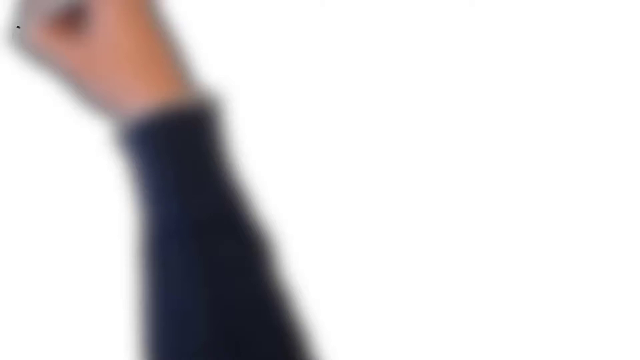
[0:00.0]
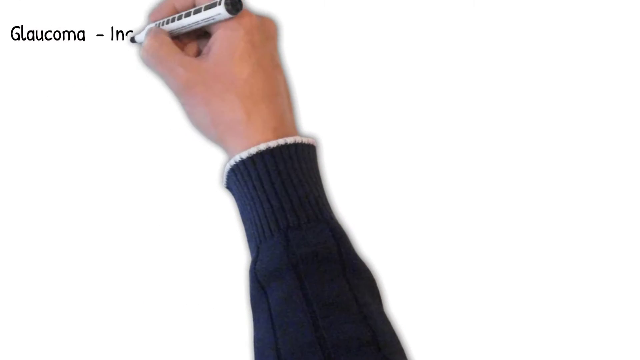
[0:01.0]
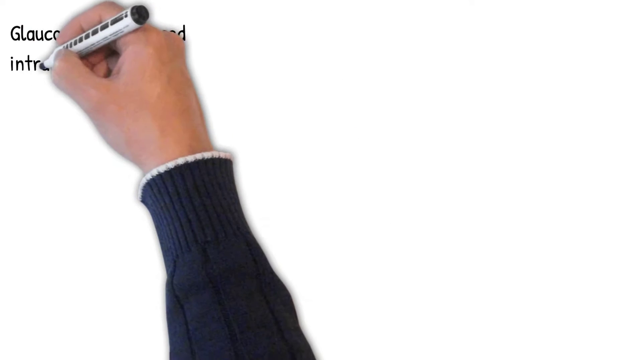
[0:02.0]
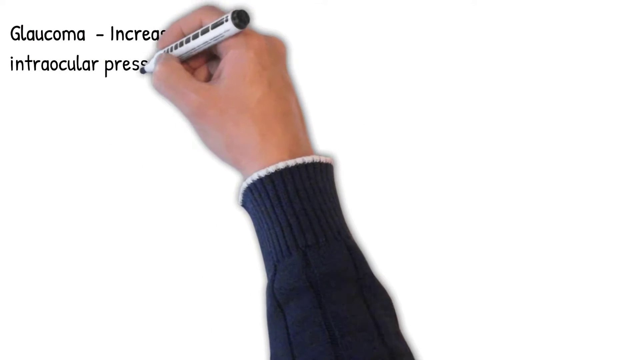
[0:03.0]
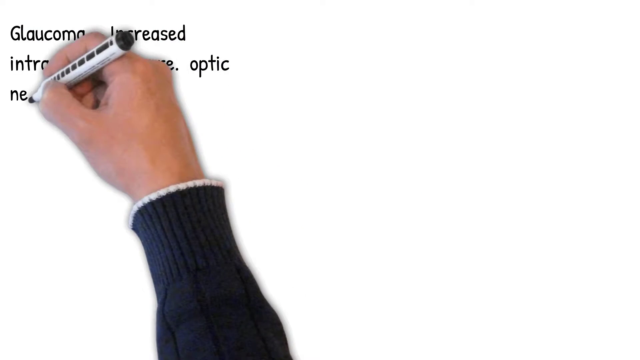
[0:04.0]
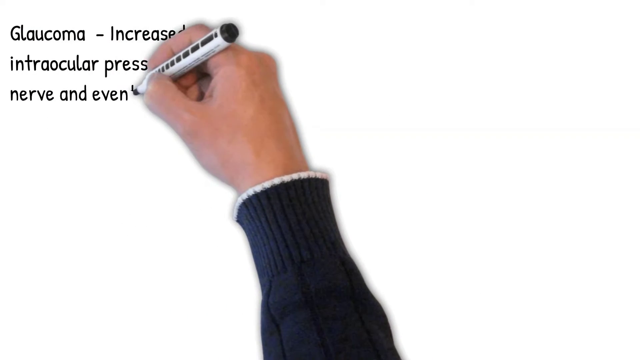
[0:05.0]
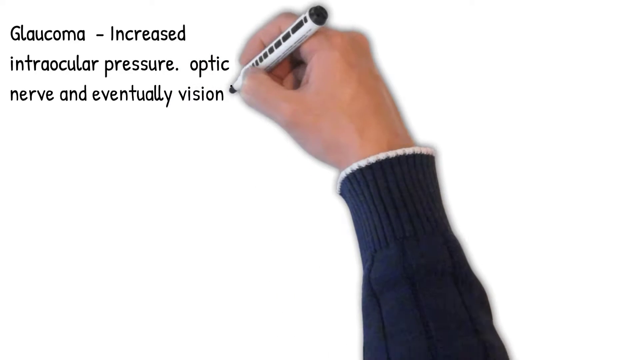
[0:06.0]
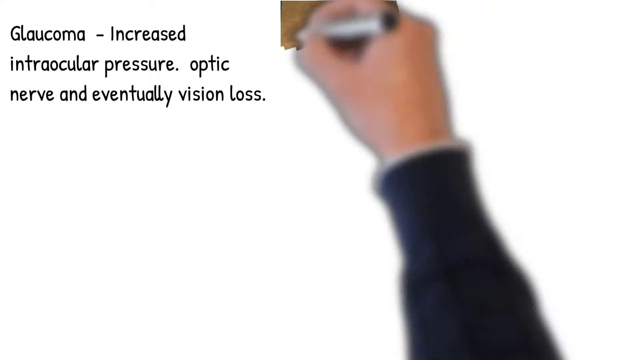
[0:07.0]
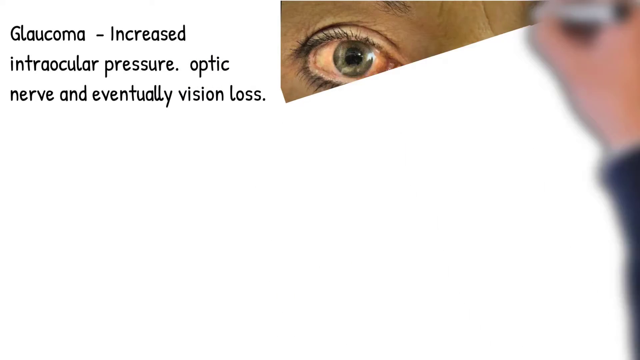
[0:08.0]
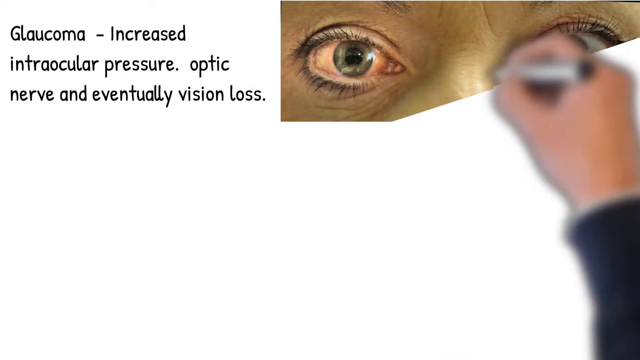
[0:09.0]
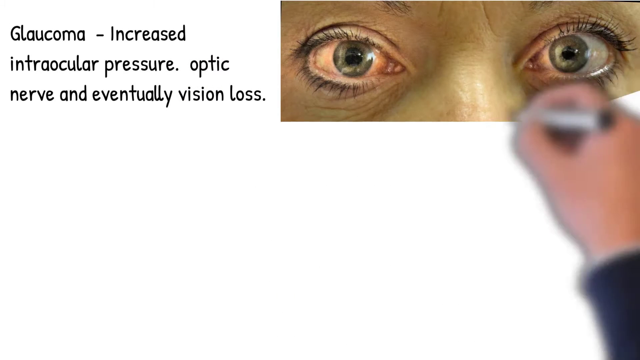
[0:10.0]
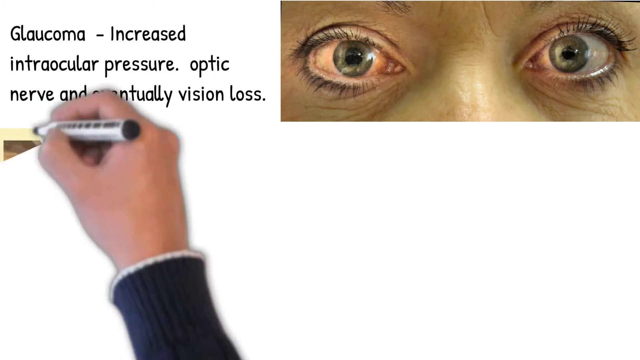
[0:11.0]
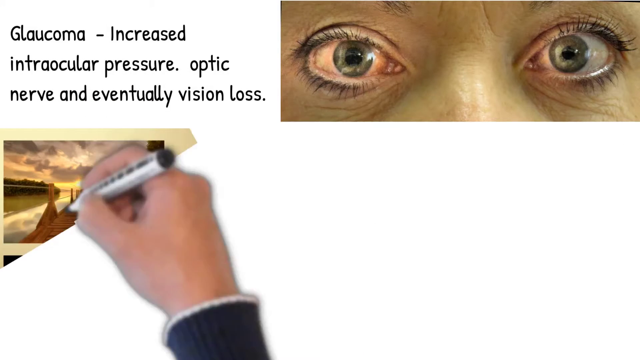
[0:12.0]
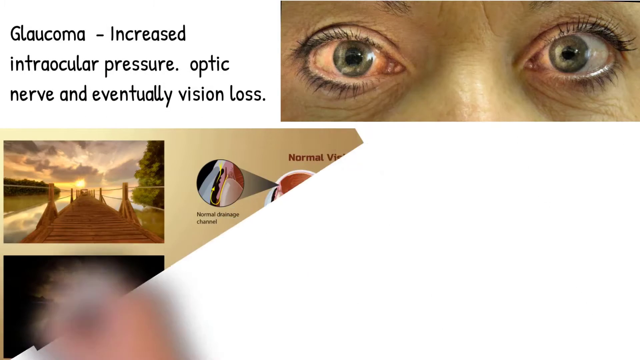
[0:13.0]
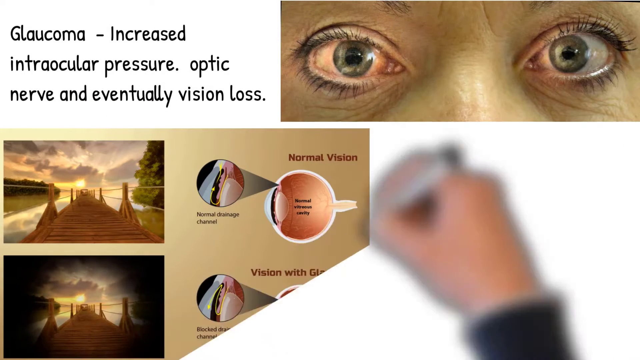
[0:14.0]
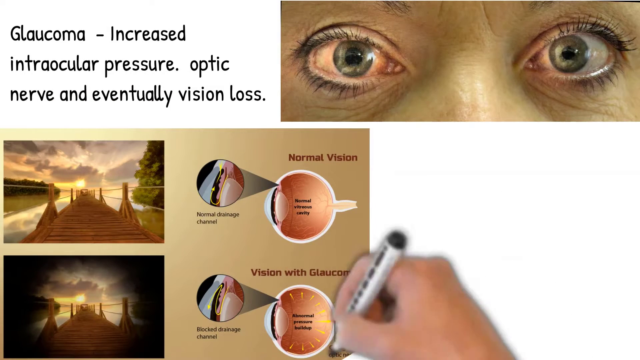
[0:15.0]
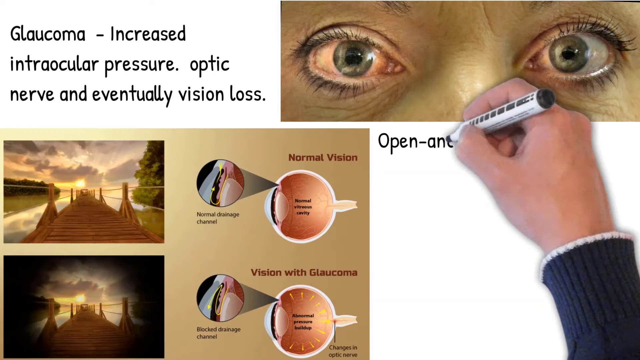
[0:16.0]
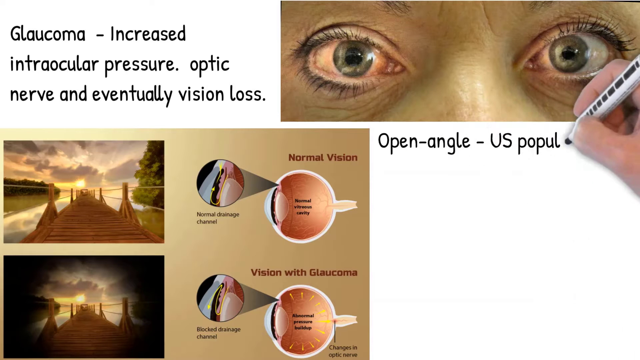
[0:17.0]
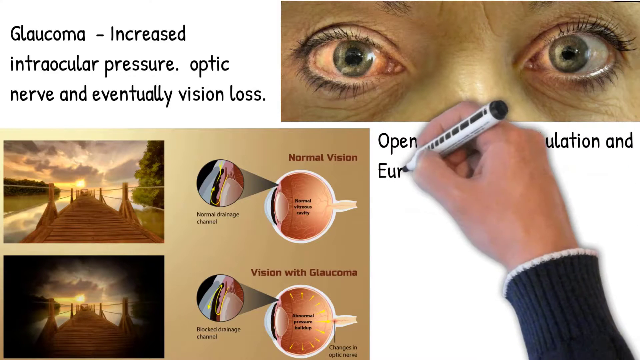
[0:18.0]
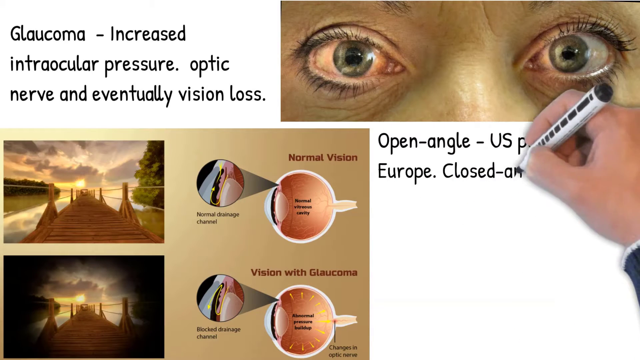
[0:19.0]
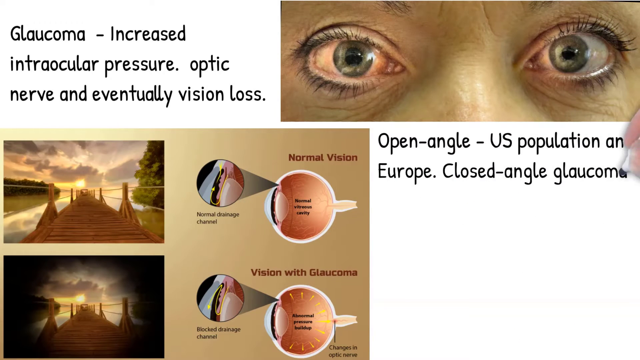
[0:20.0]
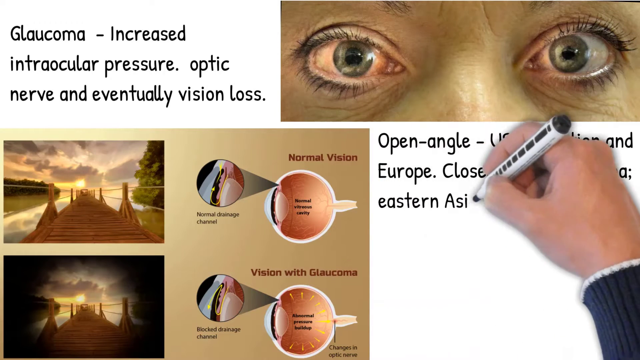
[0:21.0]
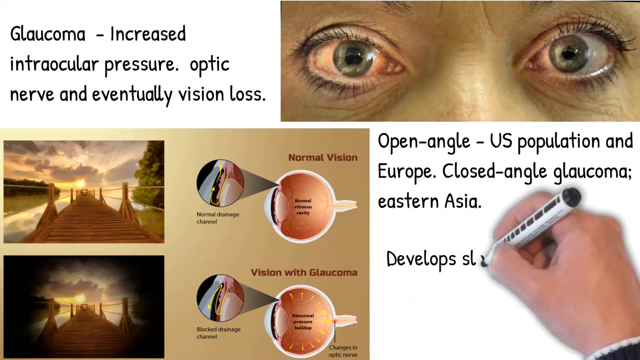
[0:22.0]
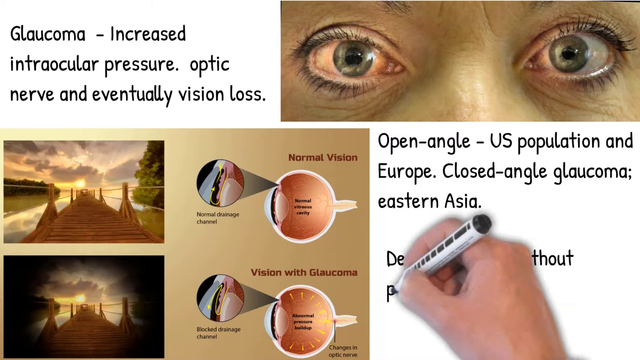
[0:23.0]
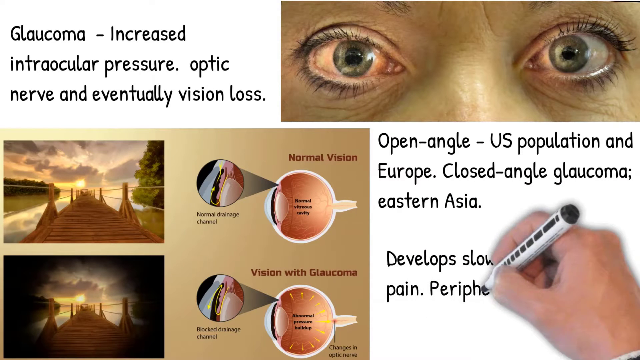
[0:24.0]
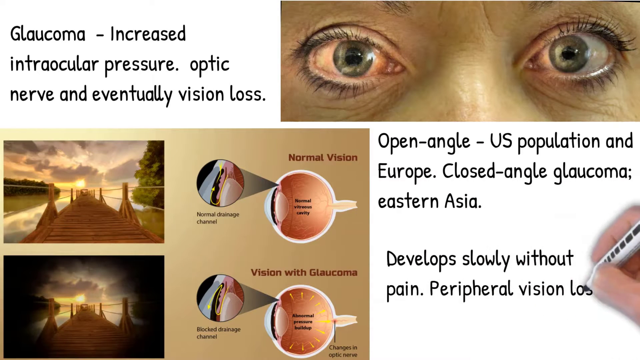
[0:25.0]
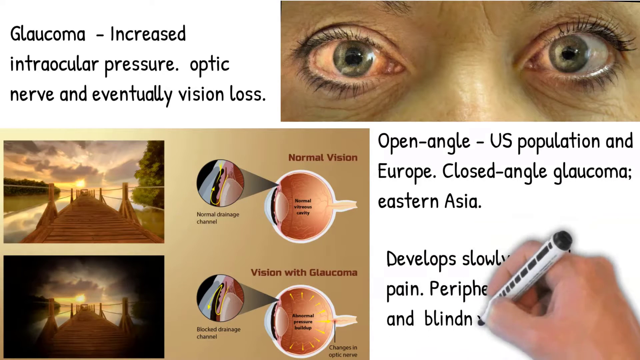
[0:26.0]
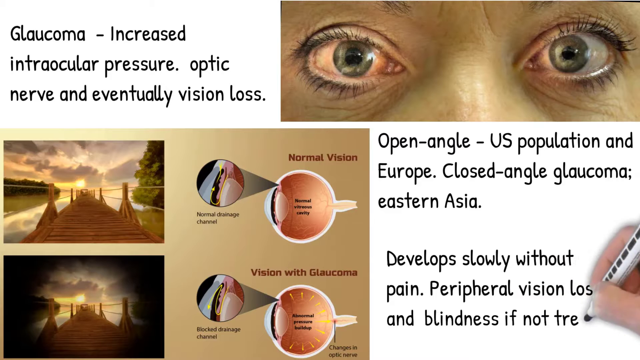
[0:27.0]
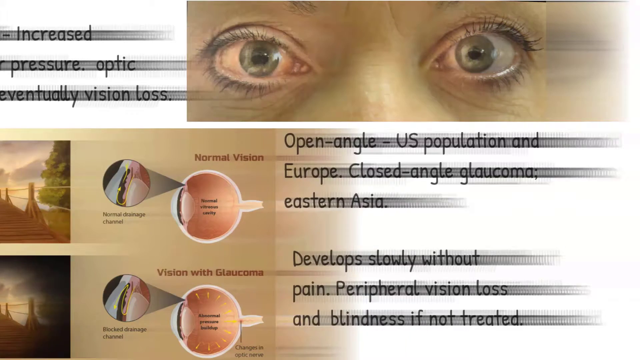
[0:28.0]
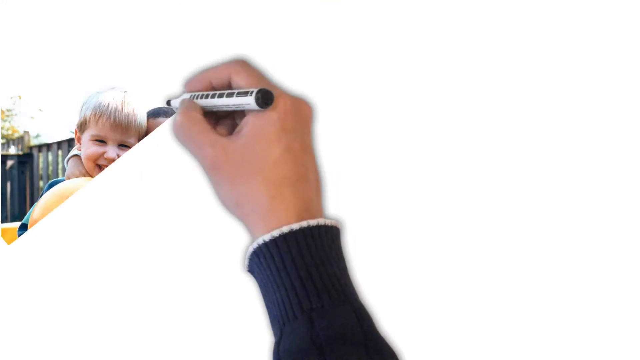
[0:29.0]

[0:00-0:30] The hand of a white male, wearing a blue-sleeved top with white trim, writes about glaucoma in black pen. The writing reads "glaucoma - increased intraocular pressure" and starts on the top left-hand side of the page in three lines: "increased intraocular pressure", "optic nerve" and "eventually vision loss". To the right of these three lines, the pen scribbles as if drawing a picture, and an image of a woman's two blue eyes appears on the screen. In the bottom left of the screen, the pen sketches an image of normal vision compared to vision with glaucoma. To the right of this it writes "open angle u.s population in europe closed angle glaucoma asia eastern asia developed slowly without pain peripheral vision loss and blindness if not treated". A new page appears, and the hand continues to move to bring across an image of two children standing next to each other with a ball.